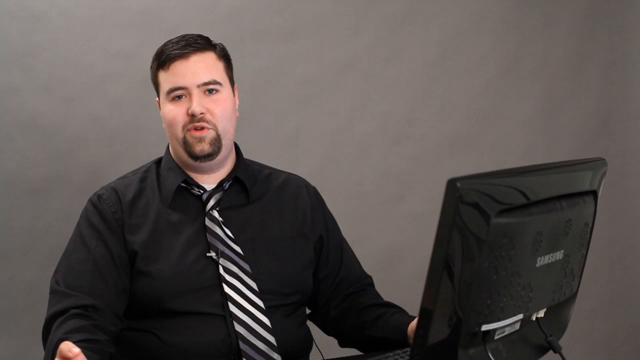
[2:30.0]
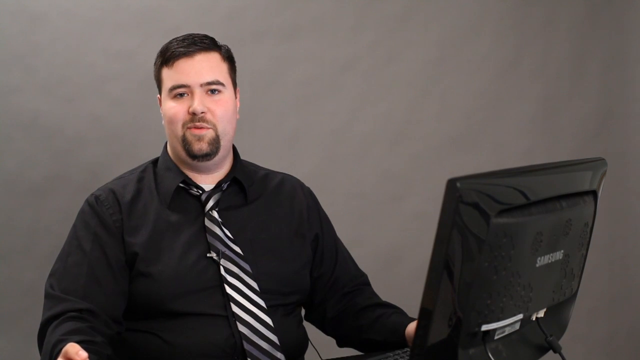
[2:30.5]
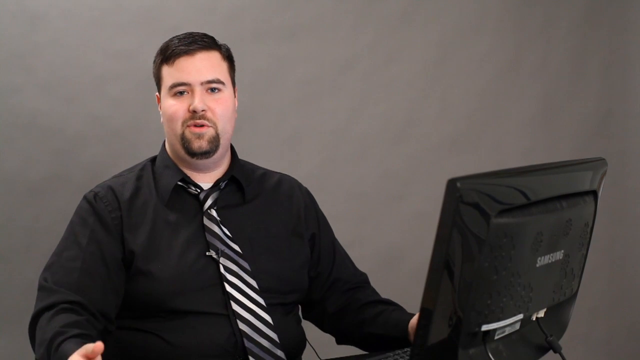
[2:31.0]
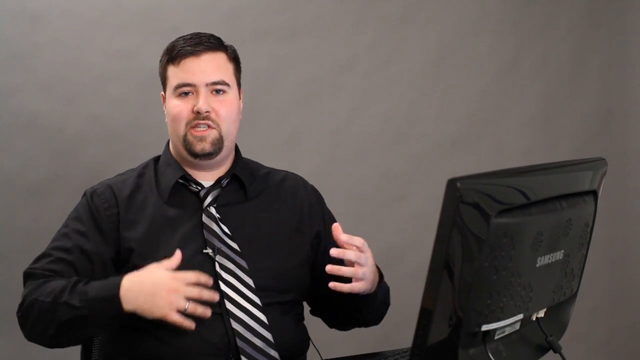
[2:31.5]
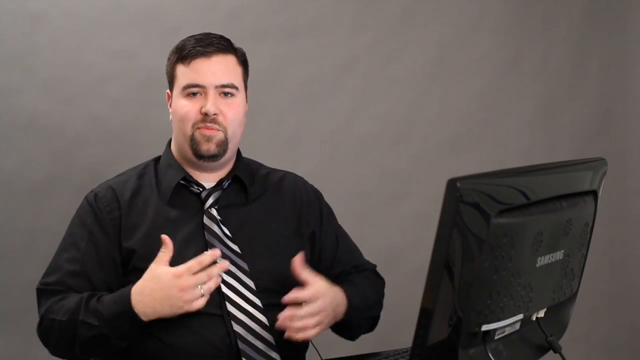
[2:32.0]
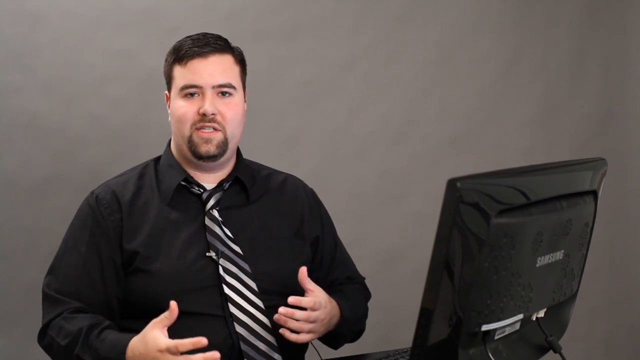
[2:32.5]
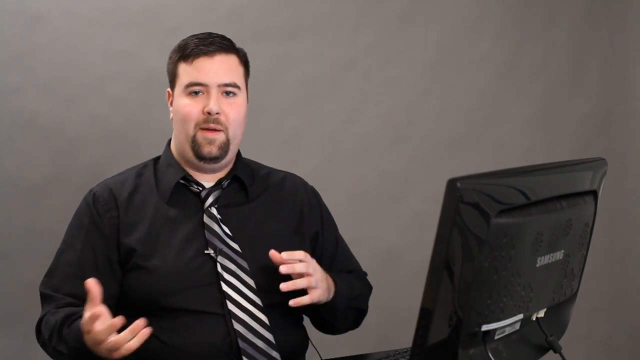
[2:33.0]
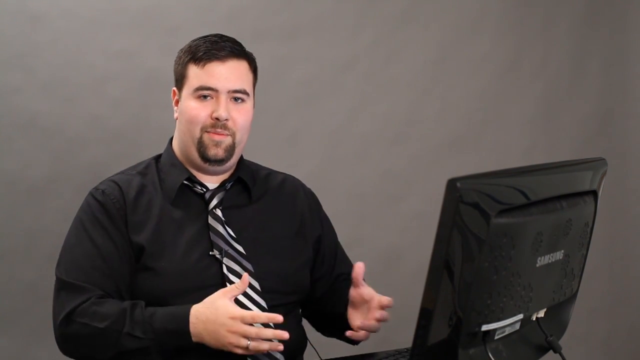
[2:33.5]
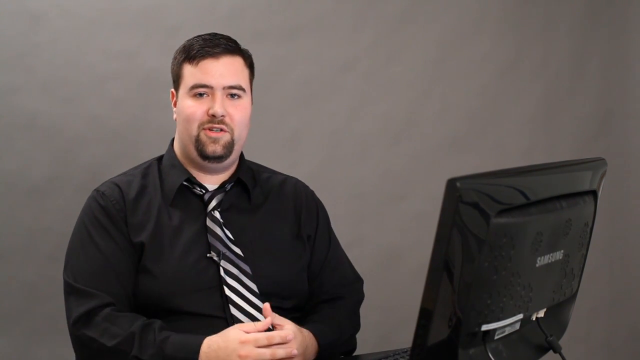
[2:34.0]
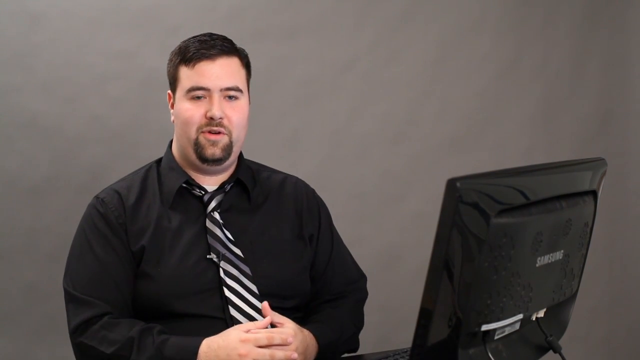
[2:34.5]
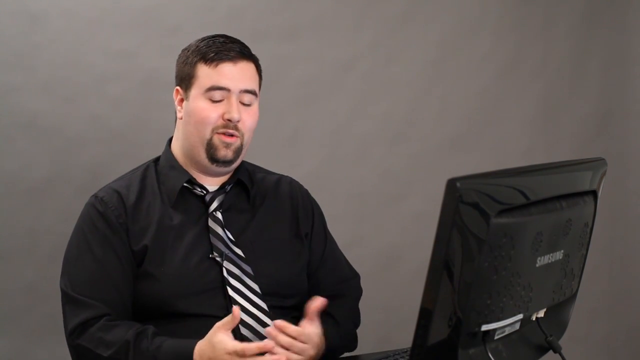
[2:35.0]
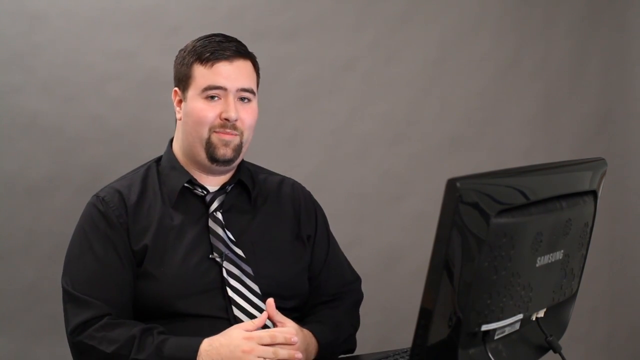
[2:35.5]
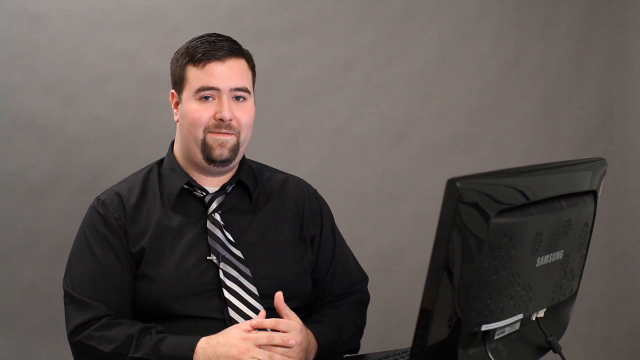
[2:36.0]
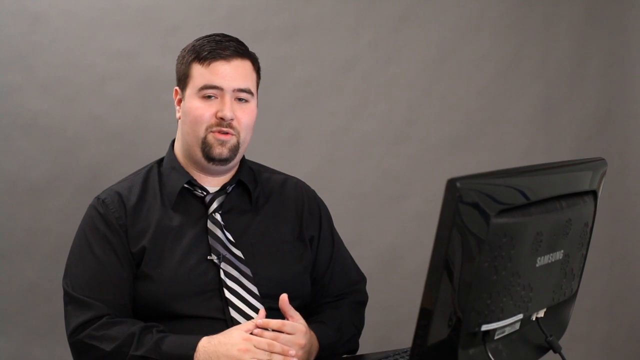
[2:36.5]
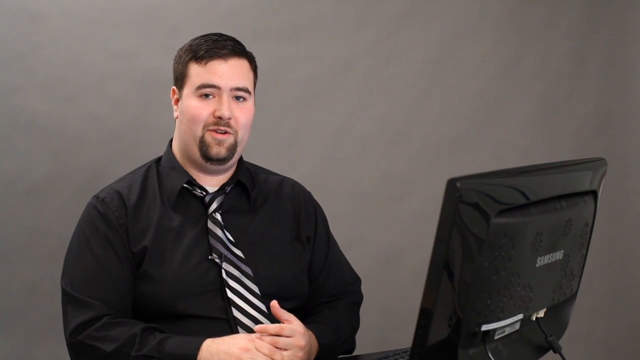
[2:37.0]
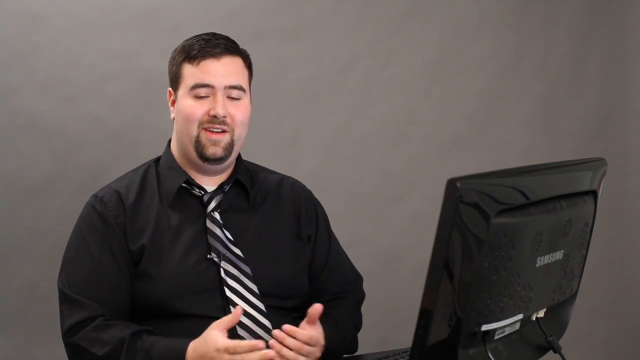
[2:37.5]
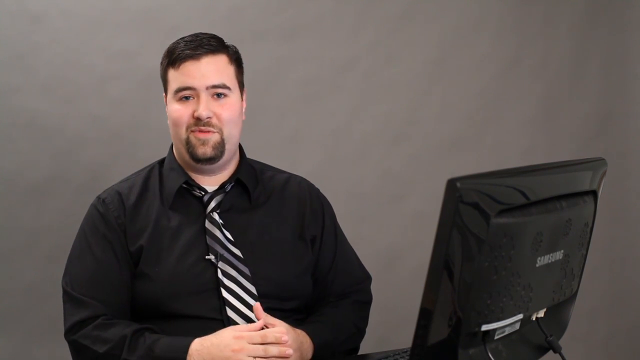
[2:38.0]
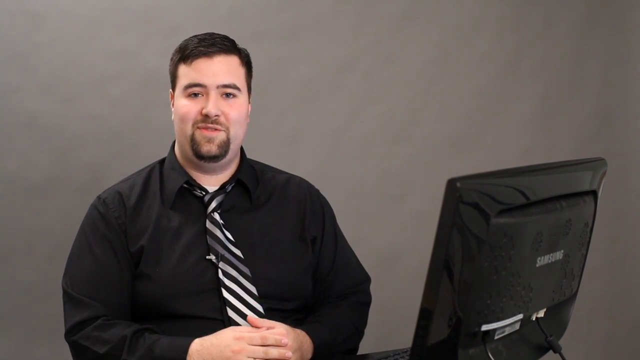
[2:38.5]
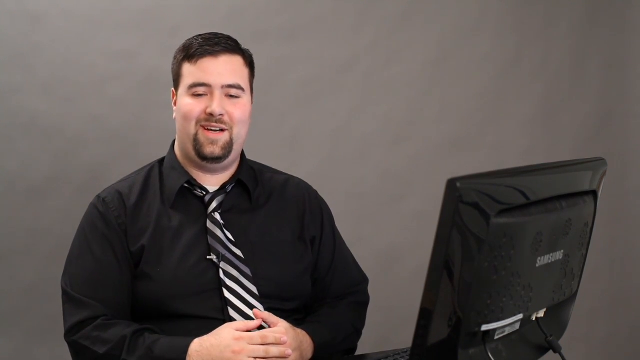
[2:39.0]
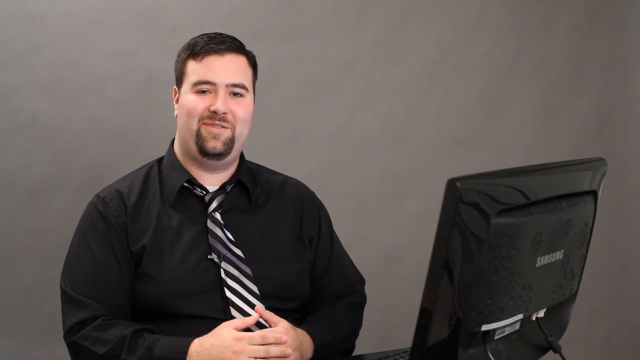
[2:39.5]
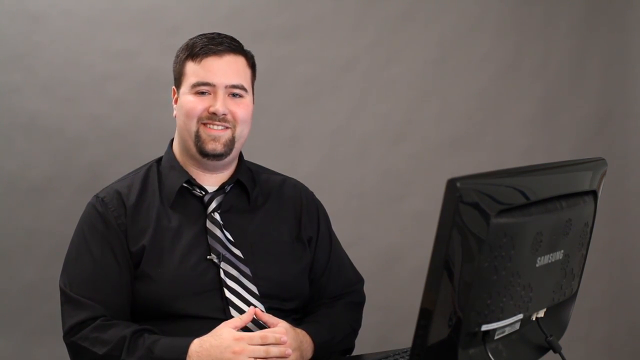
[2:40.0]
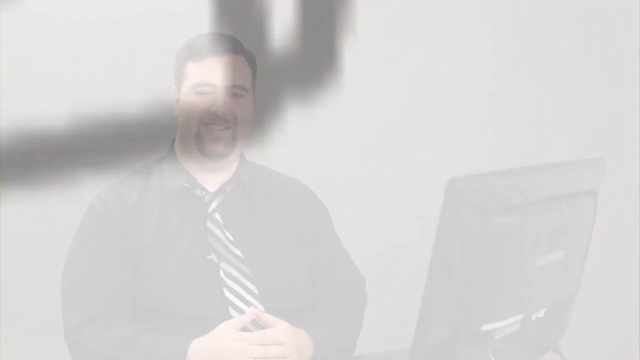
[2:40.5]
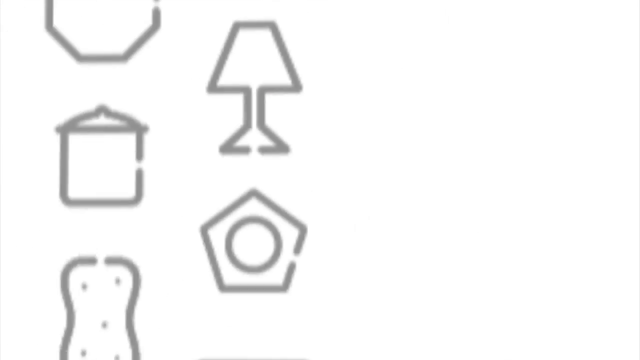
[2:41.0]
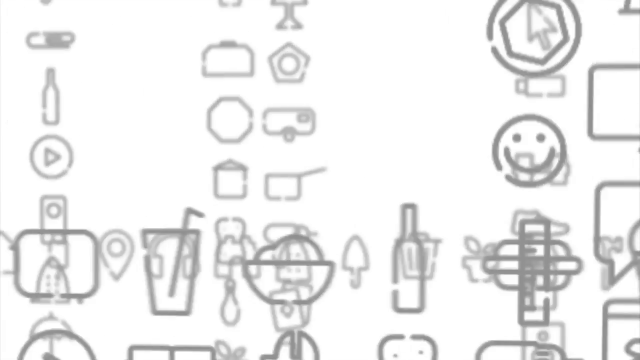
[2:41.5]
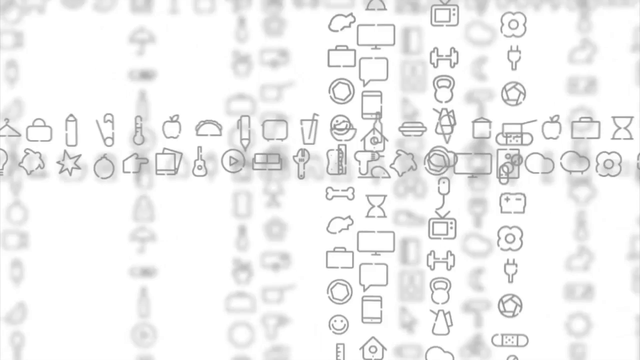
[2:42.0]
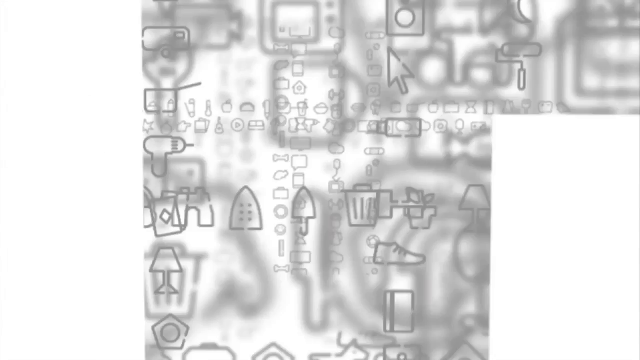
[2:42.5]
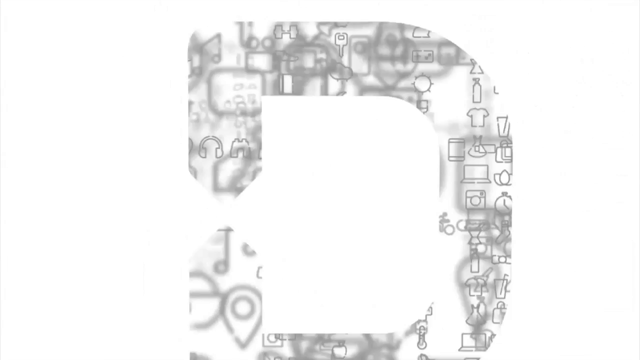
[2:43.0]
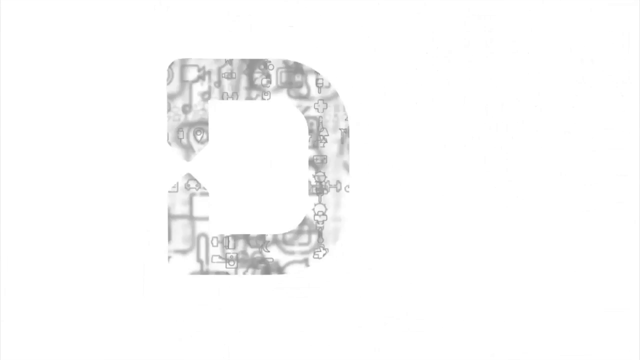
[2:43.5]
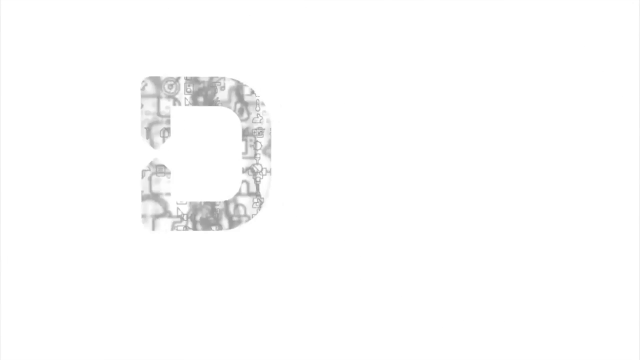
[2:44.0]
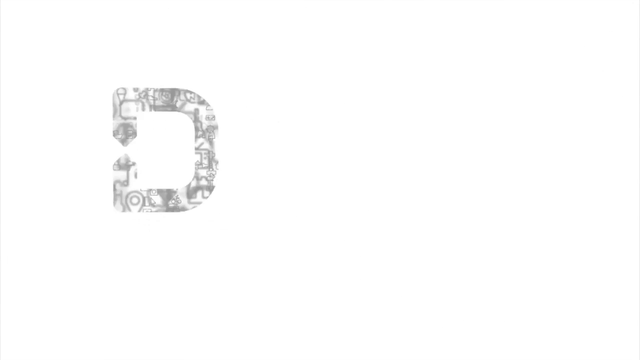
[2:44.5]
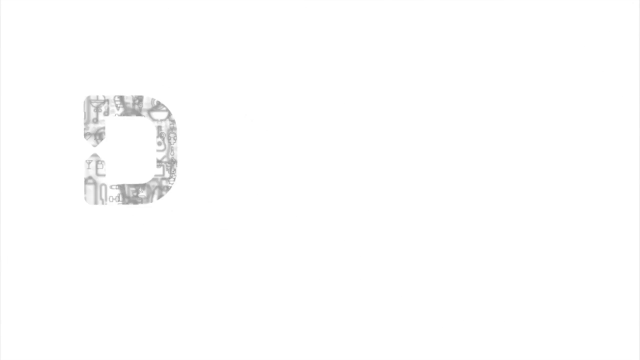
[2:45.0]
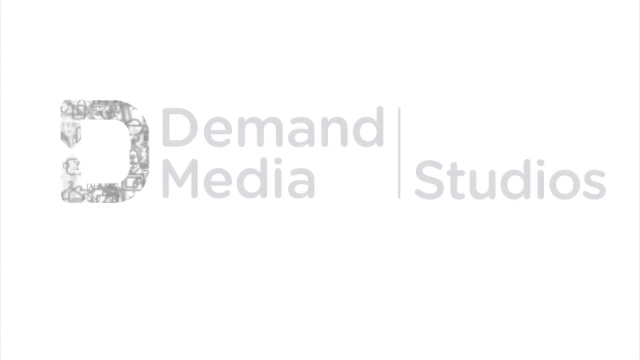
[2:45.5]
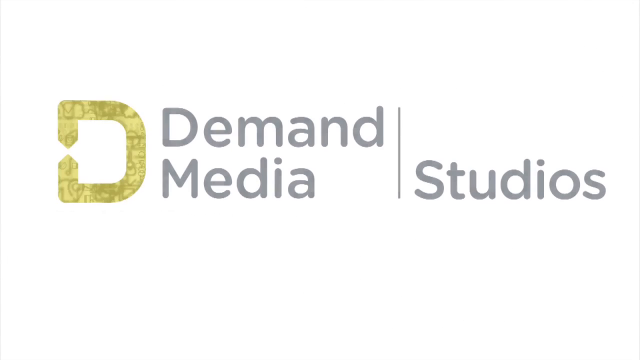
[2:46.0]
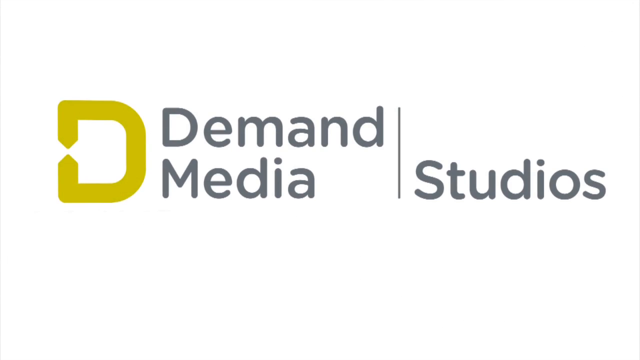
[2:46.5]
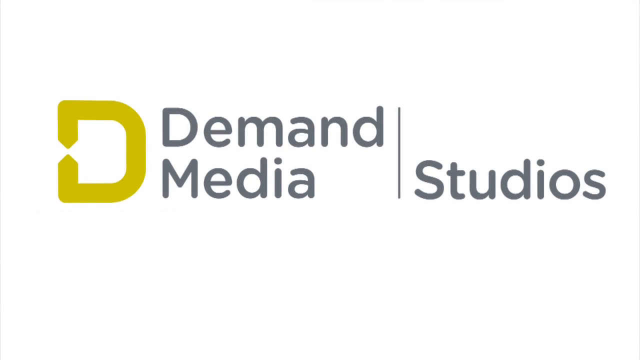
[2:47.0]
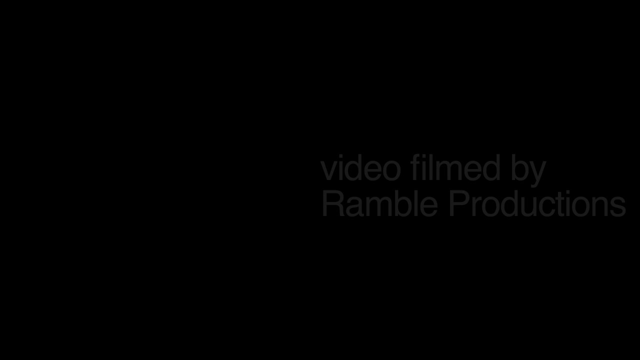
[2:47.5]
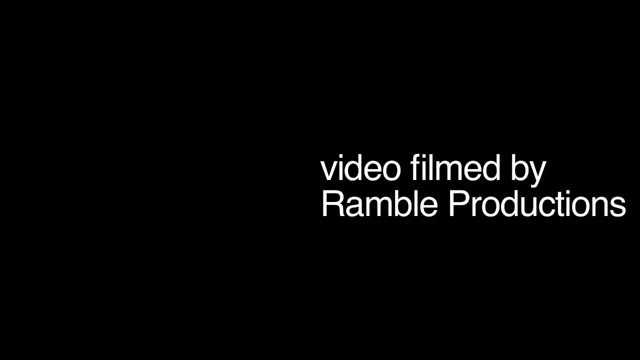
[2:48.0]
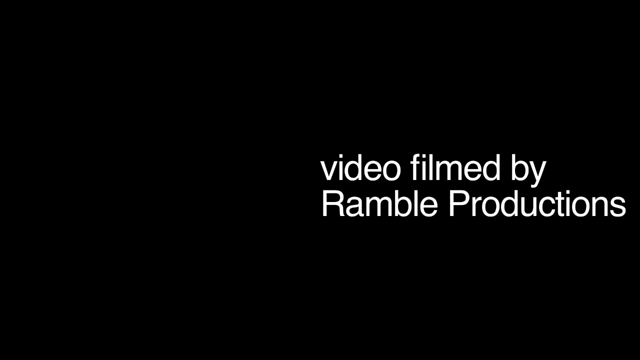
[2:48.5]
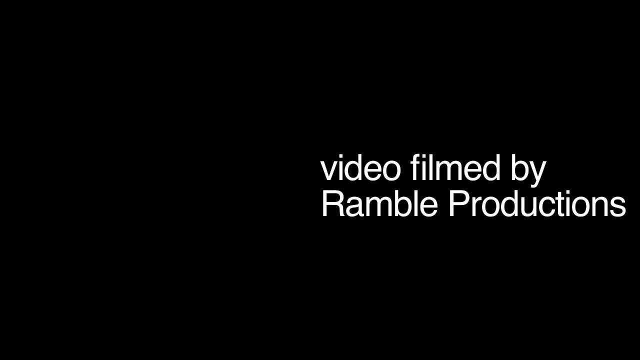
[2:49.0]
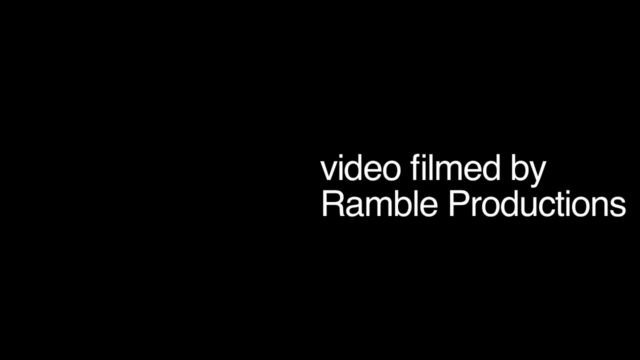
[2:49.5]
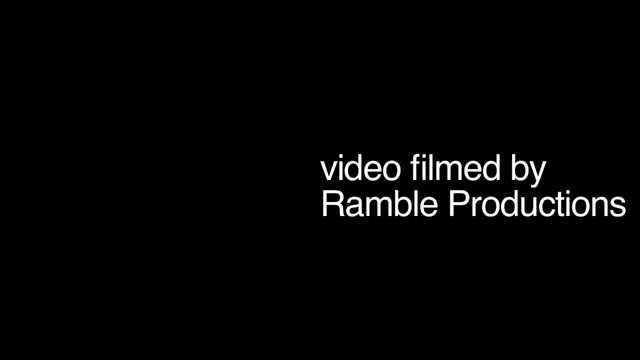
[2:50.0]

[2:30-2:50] The video returns to the presenter, a Caucasian man with a mustache that kind of connects to his beard going down to his chin, wearing a solid black shirt and a striped tie in black, white and gray. He sits in front of what looks like a Samsung all-in-one computer, which looks like an older model with white display port connections for video. He kind of gestures with his hands and smiles. The video then goes to a video about Demand Media Studio. As the man continues to talk, he has his hands together as if twiddling his thumbs, then gestures, opening his hands and clapping them together. He is wearing a mic. He finishes with a smile.